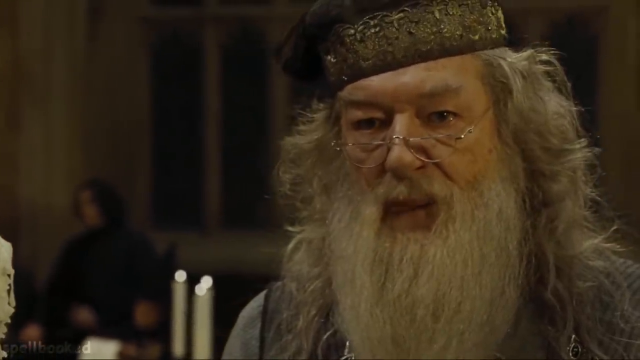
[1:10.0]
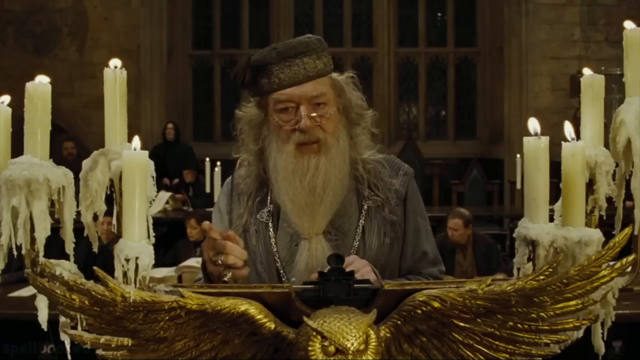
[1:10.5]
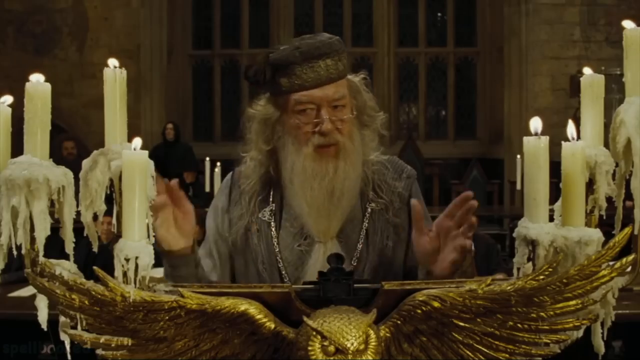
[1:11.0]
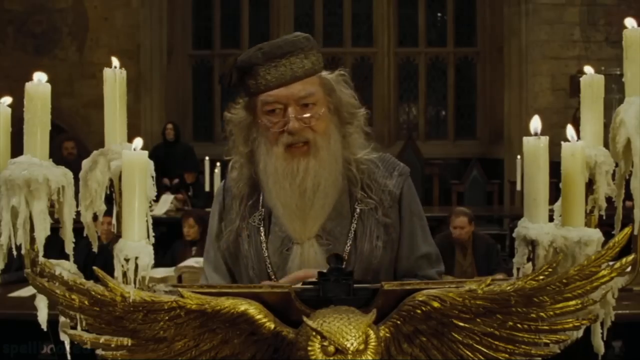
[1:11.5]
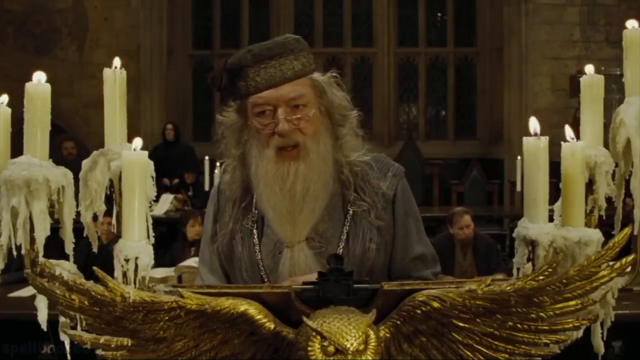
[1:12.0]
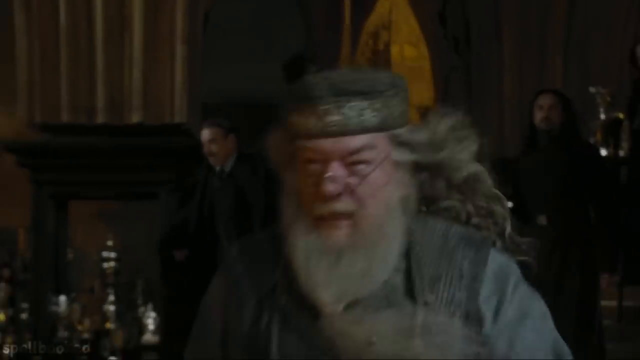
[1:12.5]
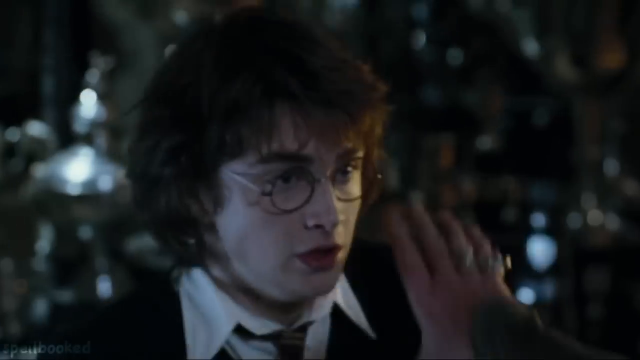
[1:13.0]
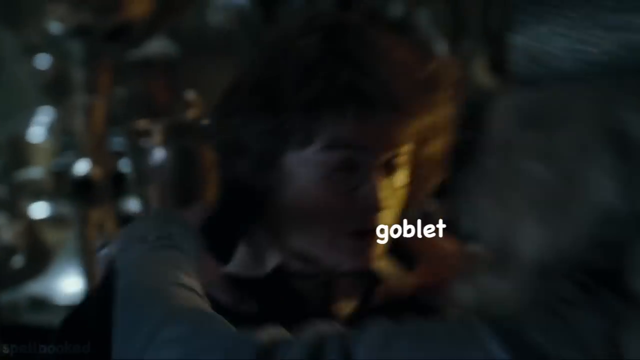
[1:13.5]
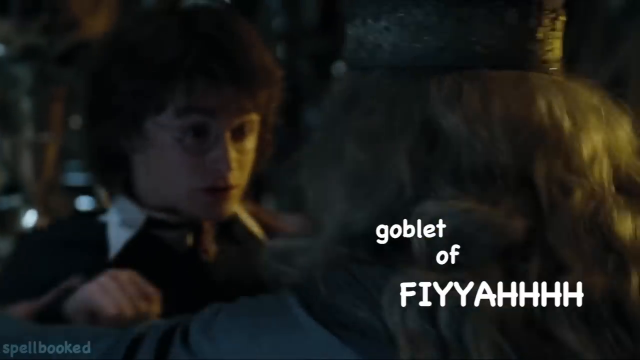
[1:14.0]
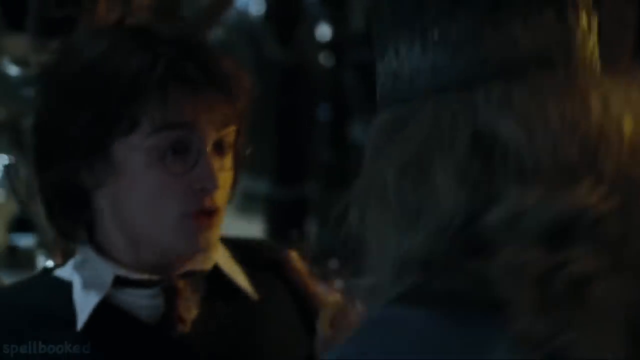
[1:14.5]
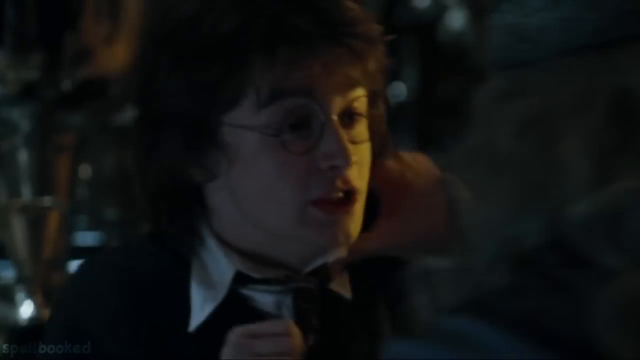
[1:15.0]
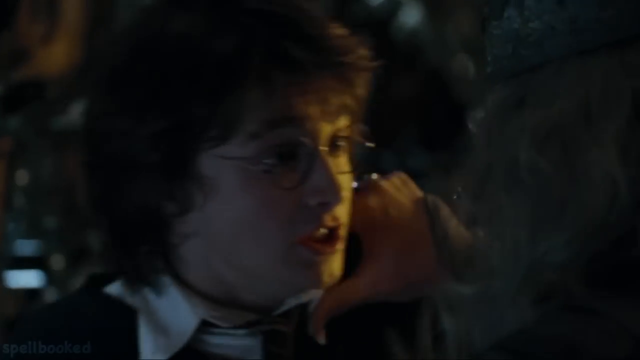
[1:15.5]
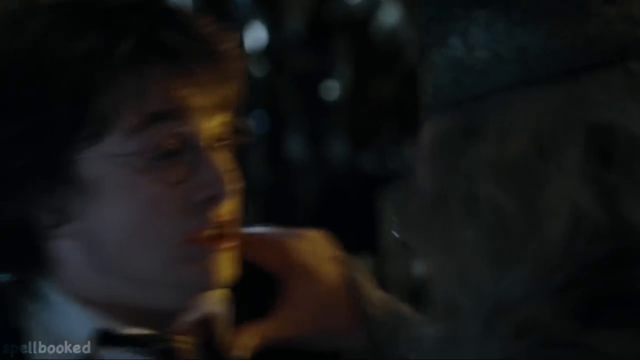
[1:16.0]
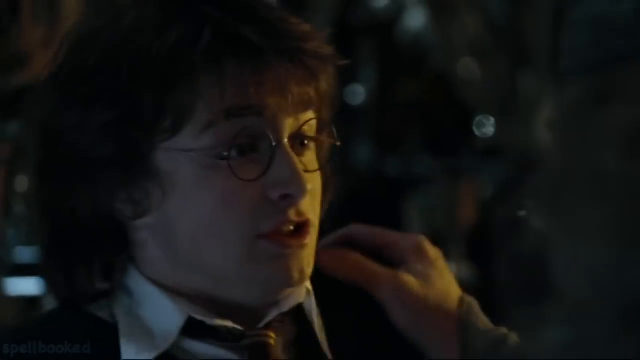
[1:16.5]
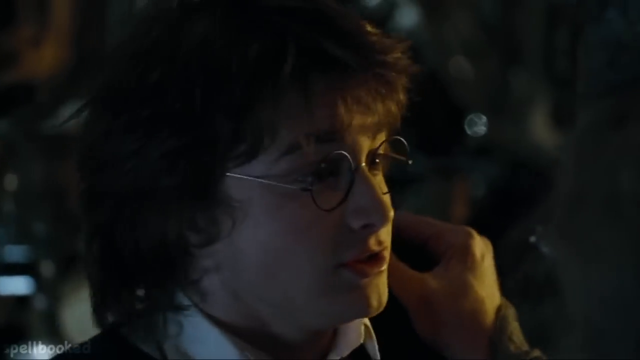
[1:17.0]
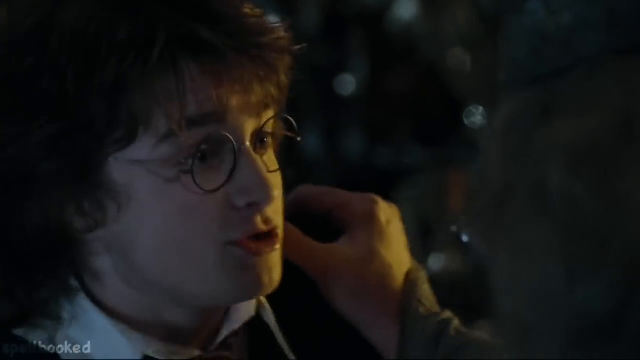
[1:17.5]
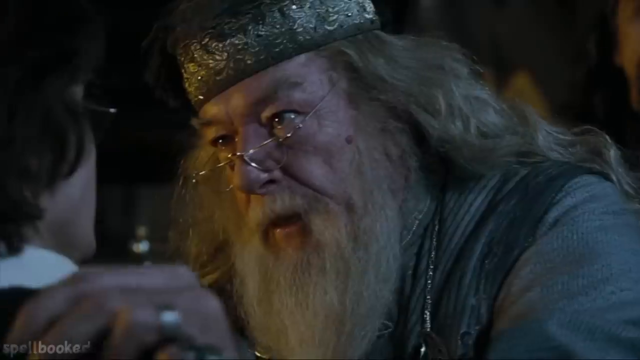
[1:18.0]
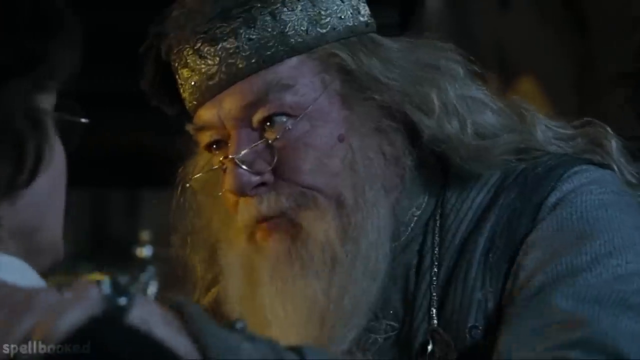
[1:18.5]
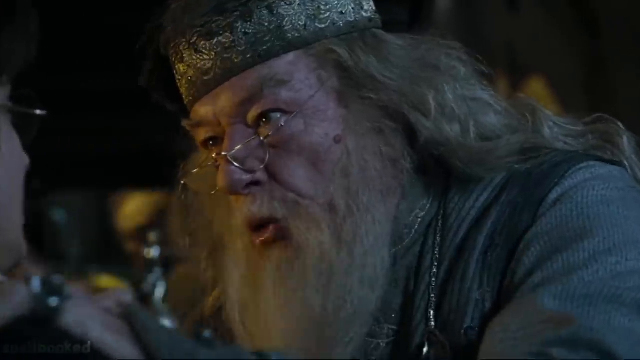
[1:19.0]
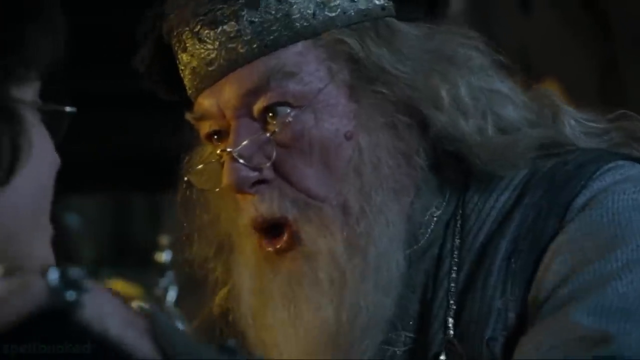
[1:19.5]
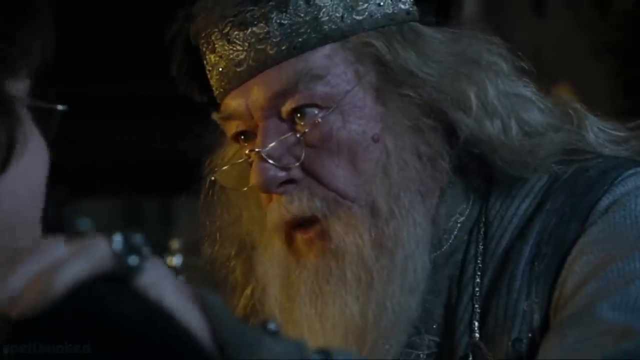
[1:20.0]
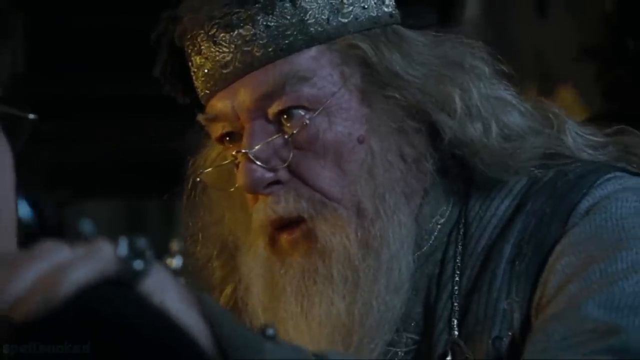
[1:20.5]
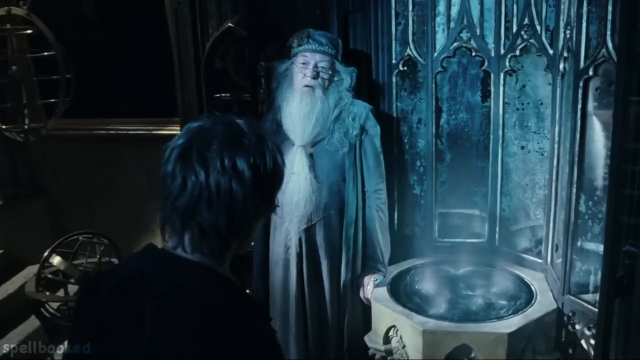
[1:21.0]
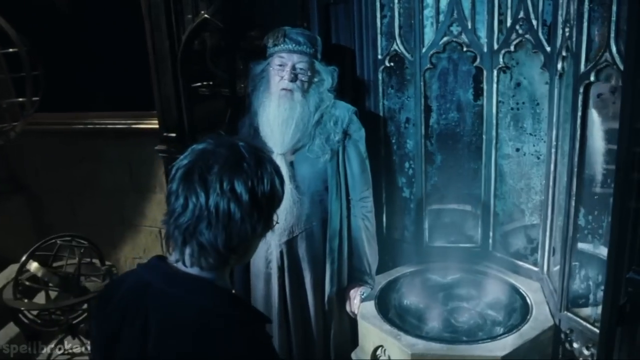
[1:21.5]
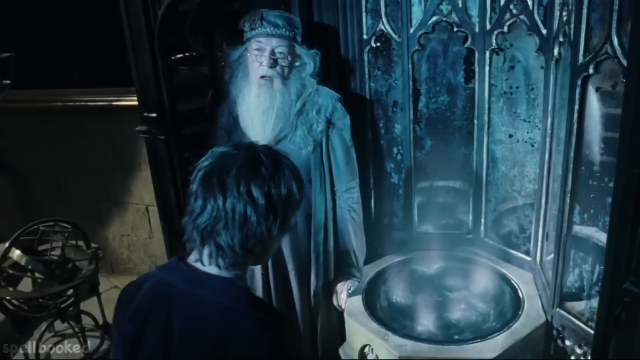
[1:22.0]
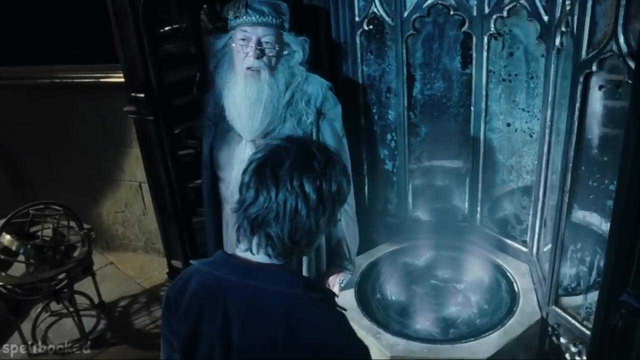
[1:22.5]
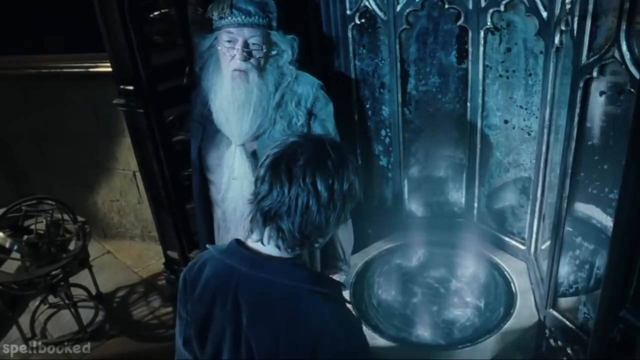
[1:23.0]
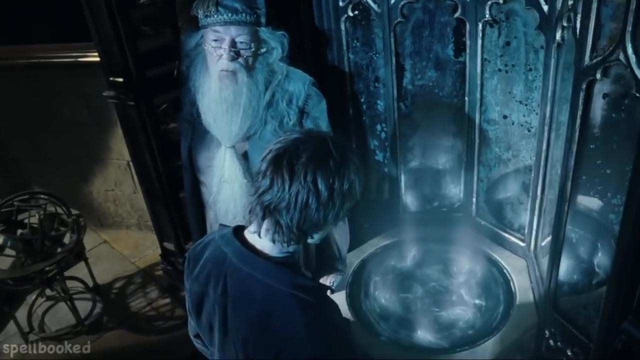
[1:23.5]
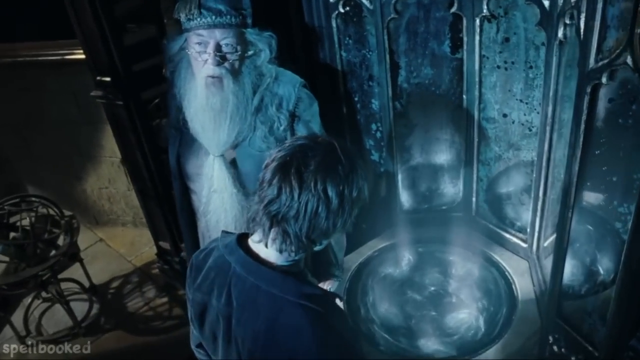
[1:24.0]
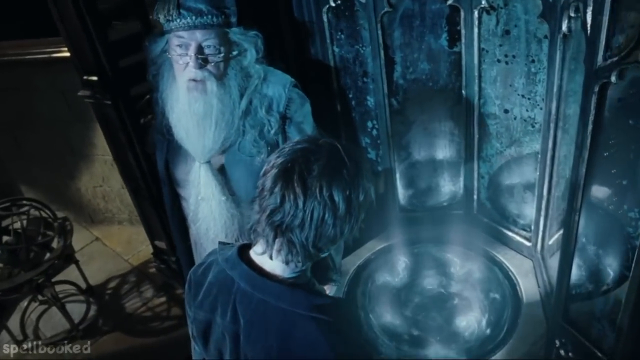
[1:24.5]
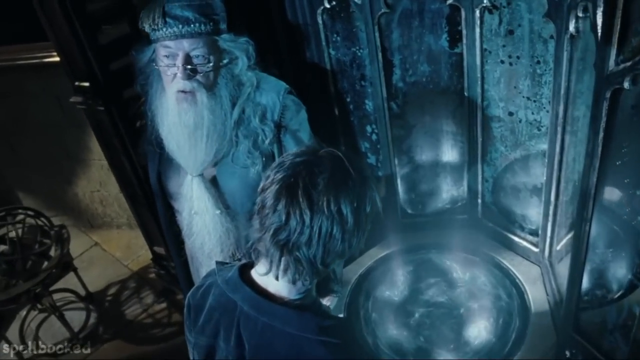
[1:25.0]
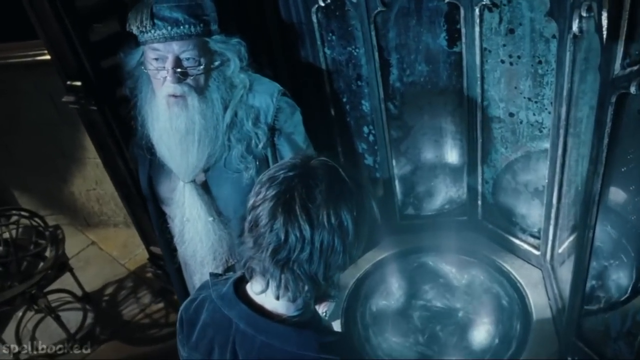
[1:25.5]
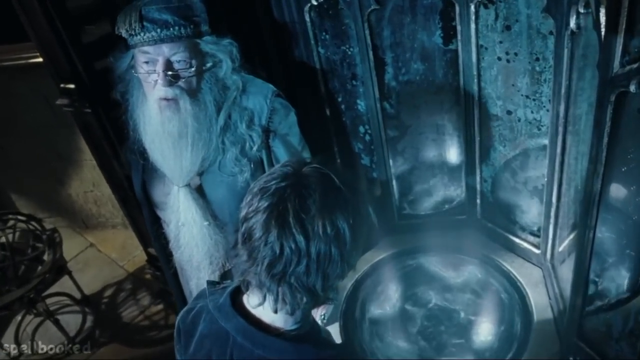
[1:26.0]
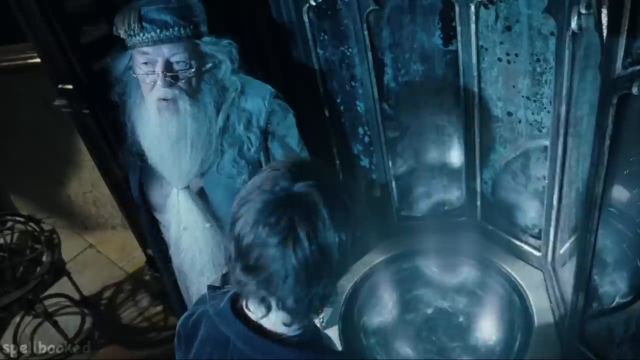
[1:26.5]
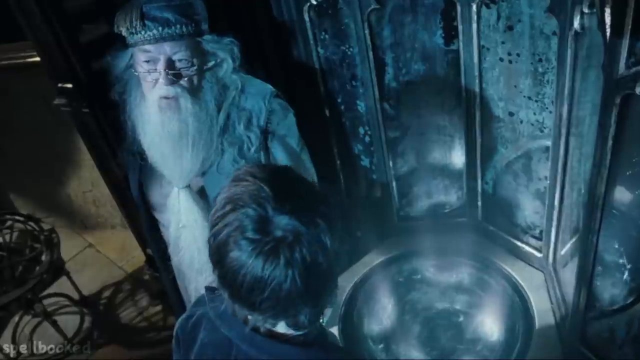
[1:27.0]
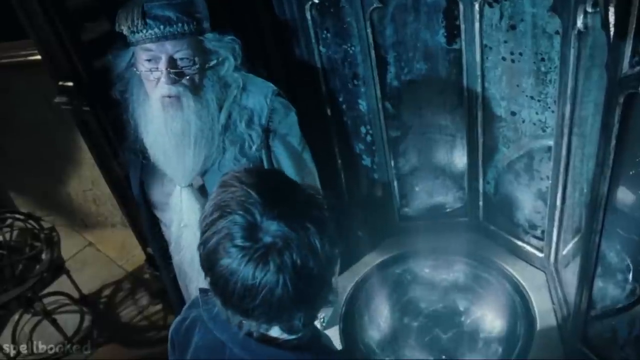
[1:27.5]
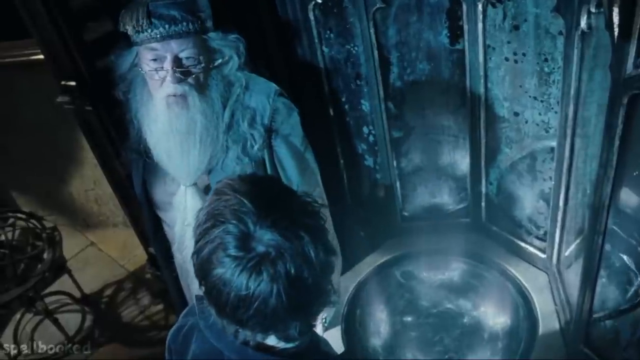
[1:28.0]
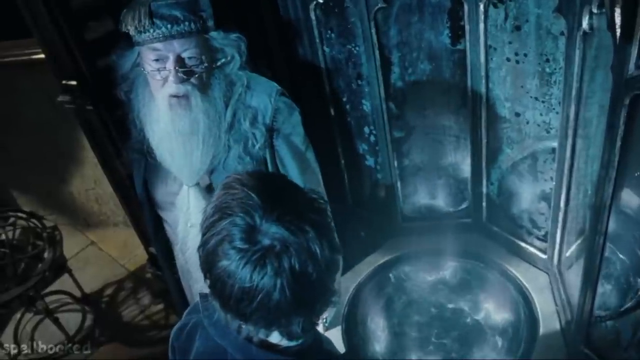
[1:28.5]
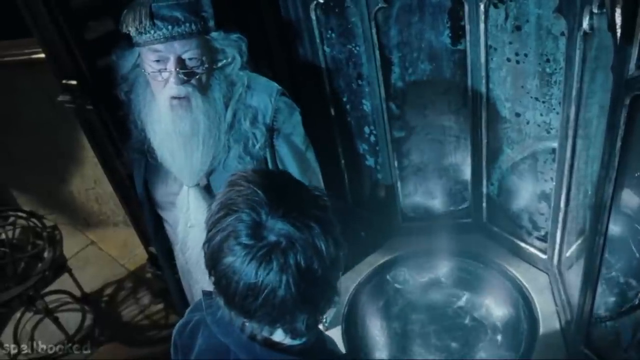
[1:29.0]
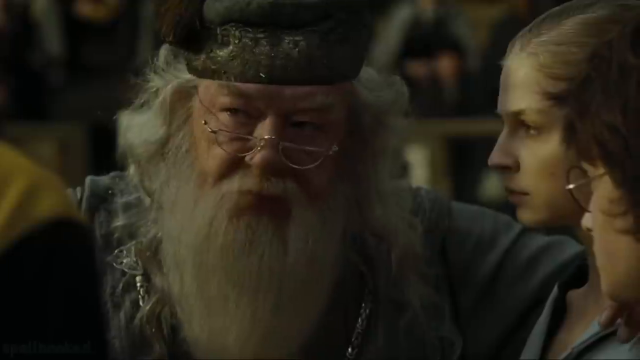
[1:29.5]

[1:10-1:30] Dumbledore stands in front of the owl-shaped podium, with candles all around it and a lot of melted wax. In the background are tables full of the other teachers at Hogwarts. The scene switches to Dumbledore almost seeming to run in anger, with staff behind him. Harry has a terrified look on his face, and Dumbledore kind of grabs him by the shoulders. Text pops up on the screen reading "goblet of fiyyahhhhh". Dumbledore is being a little rough with Harry, kind of shaking him a little and almost pushing him, and Harry looks terrified. Then comes the scene where Dumbledore shows Harry his memories using the little device for taking memories out and showing them to people.